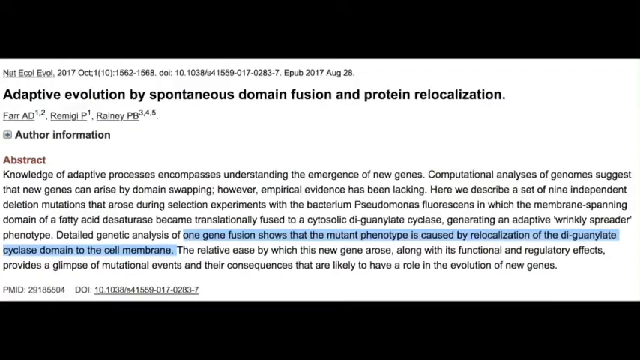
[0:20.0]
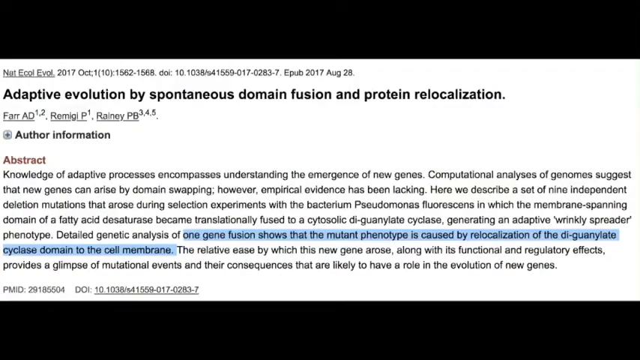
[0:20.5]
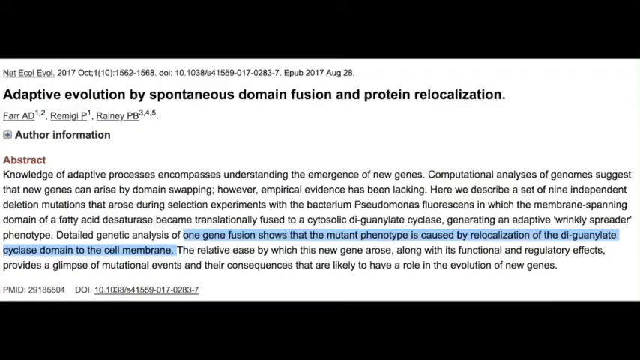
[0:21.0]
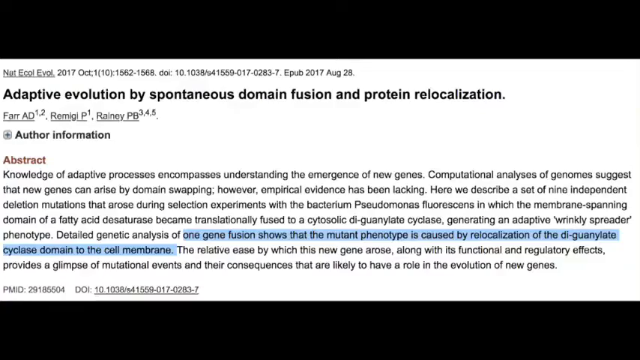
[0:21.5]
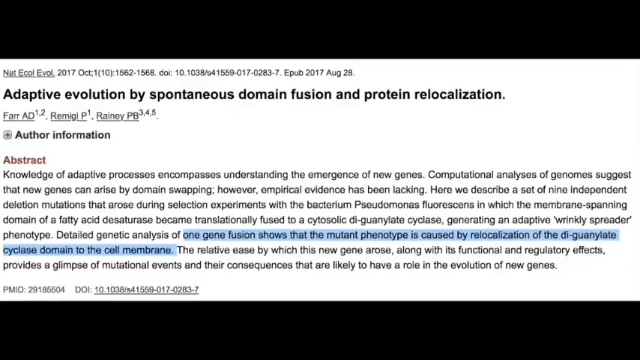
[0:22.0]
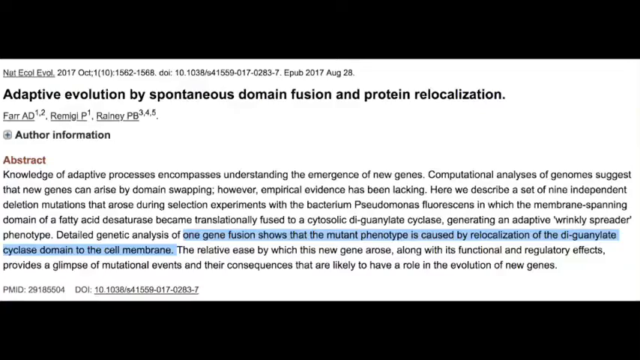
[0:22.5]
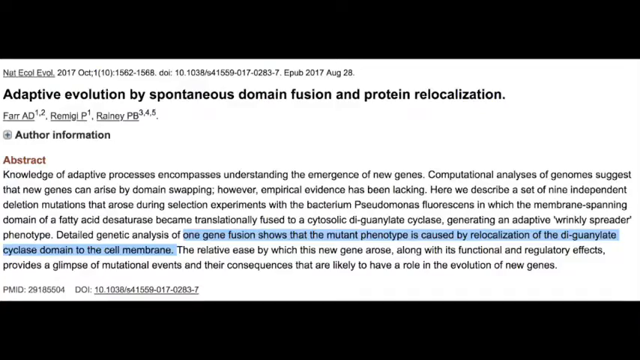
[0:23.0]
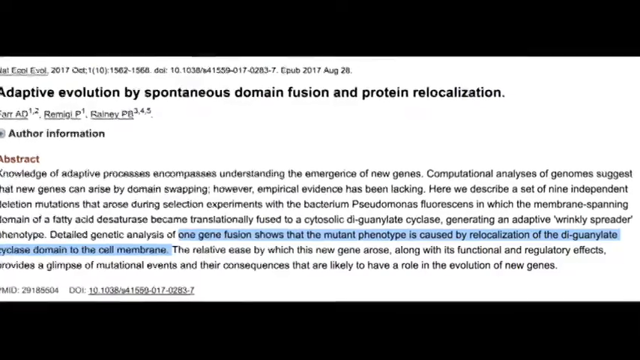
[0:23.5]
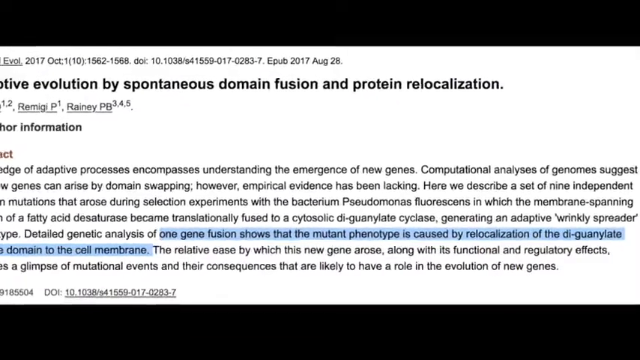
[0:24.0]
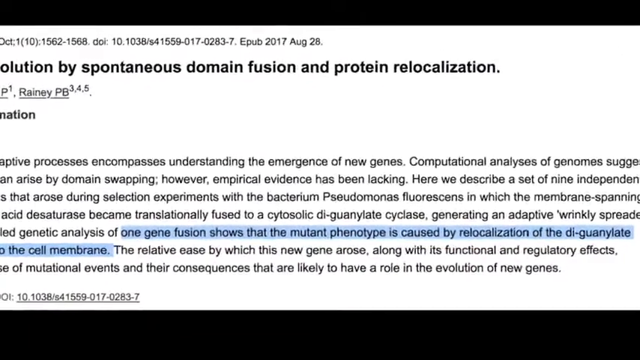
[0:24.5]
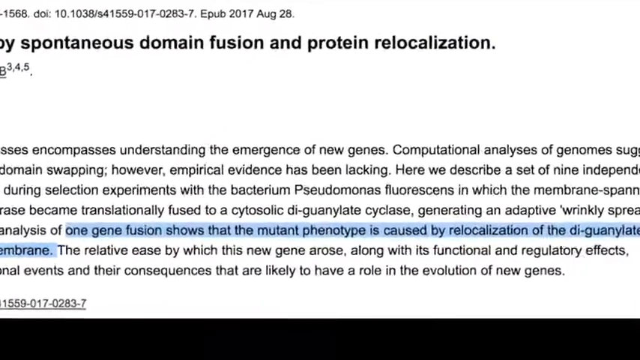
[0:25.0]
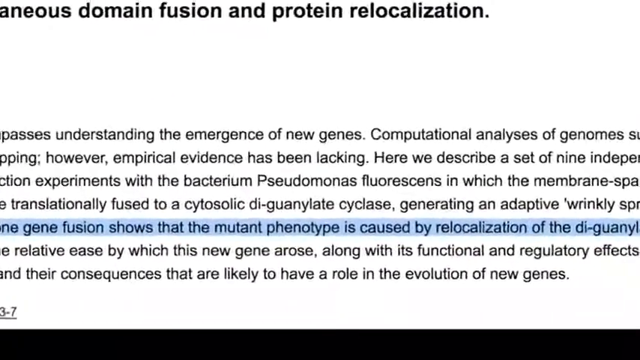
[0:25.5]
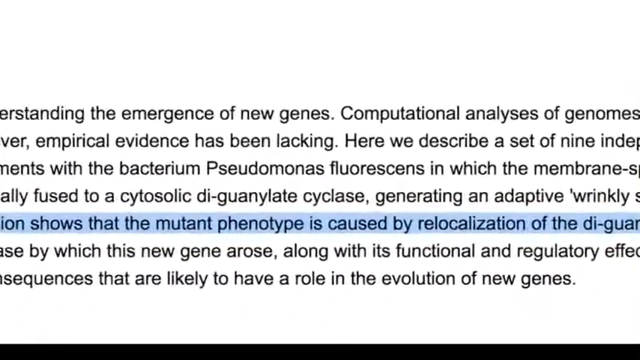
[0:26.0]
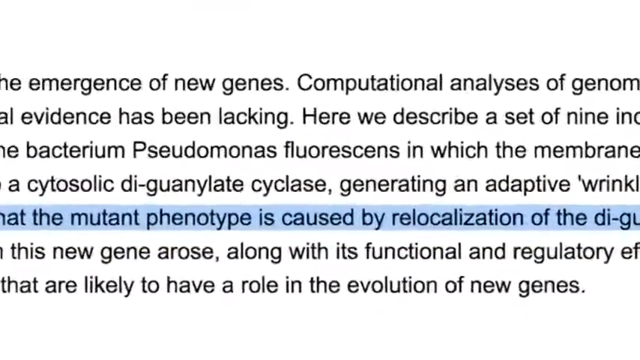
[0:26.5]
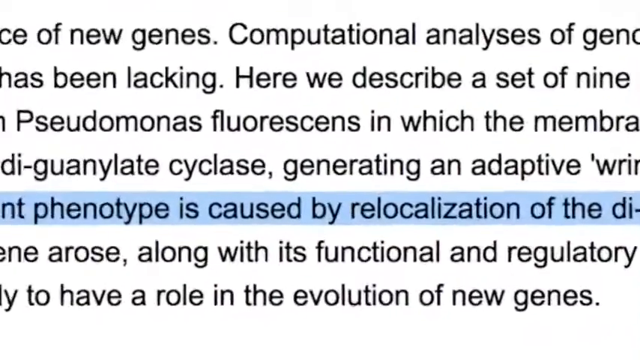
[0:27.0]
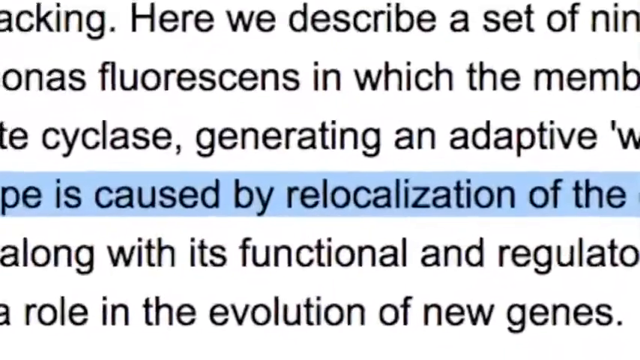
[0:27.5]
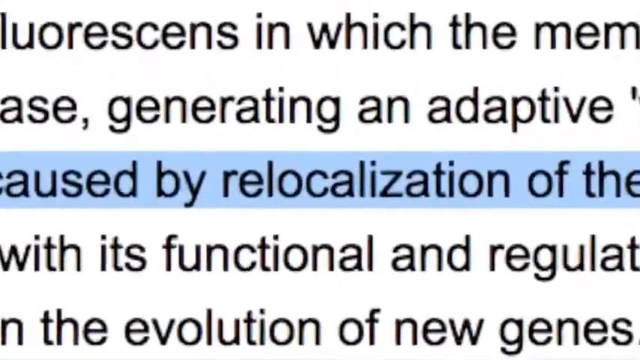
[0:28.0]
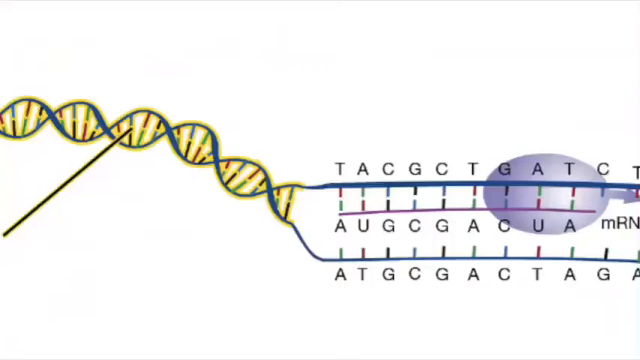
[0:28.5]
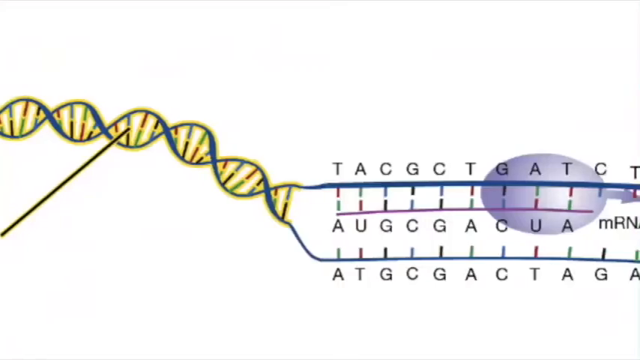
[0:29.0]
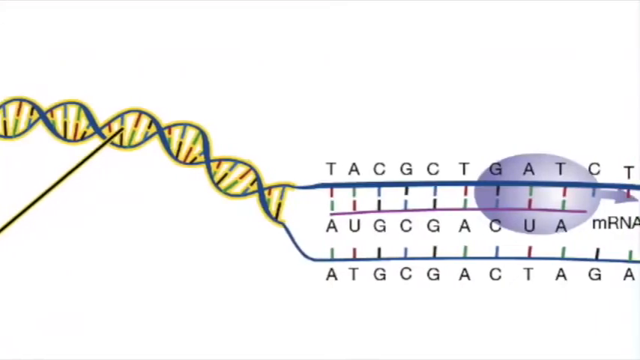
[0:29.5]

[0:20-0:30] A white banner is centered on a black background and goes all the way across the screen, containing an article. Its title, in bold black writing, is "Adaptive evolution by spontaneous domain fusion and protein relocalization." Below it is author information and then an abstract: "Knowledge of adaptive processes encompasses understanding the emergence of new genes. Computational analysis of genomes suggests that new genes can arise by domain swapping. However, empirical evidence has been lacking. Here we describe a set of nine independent deletion mutations that arose during selection experiments with the bacterium Pseudomonas fluorescence in which the membrane spanning domain of a fatty acid desaturase became translationally fused to a cytosolic di-guanylate cyclase generating an adaptive wrinkly spreader phenotype. Detailed genetic analysis of one gene fusion shows that the mutant phenotype is caused by relocalization of the di-guanylate cyclase domain to the cell membrane." That last sentence is highlighted in blue. The text continues: "The relative ease by which this new gene arose along with its functional and regulatory effects provides a glimpse of mutation events and their consequences that are likely to have a role in the evolution of new genes." The camera zooms in on the word "re-localization." A new screen follows with a white background and a DNA spiral coming from the middle of the left side to the middle of the screen, arcing down a little. A pointer points to the middle swirl, and blue lines come from each line of the DNA, with letters along each line: the top reads T-A-C-G-C-T-T-A-T-C-T, the one beneath reads A-U-G-C-G-A-C-U-A, and under the bottom blue line it reads A-T-G-C-G-A-C-T-A-G-A.